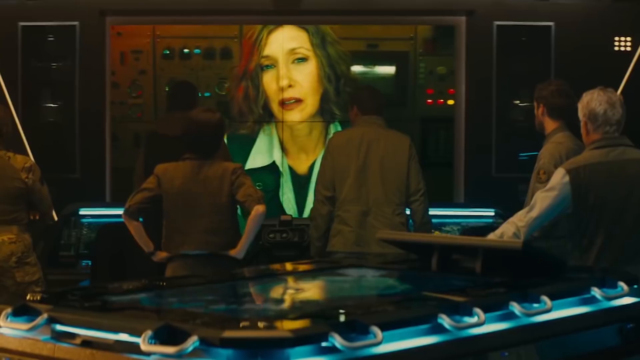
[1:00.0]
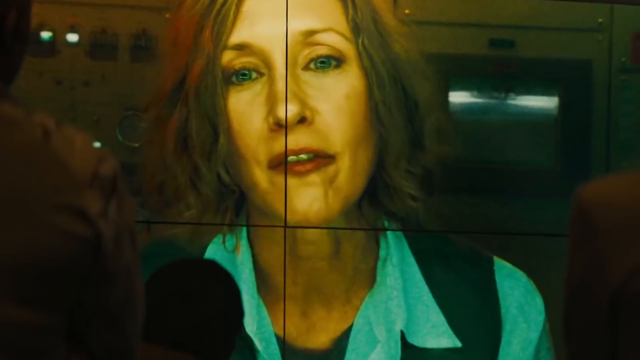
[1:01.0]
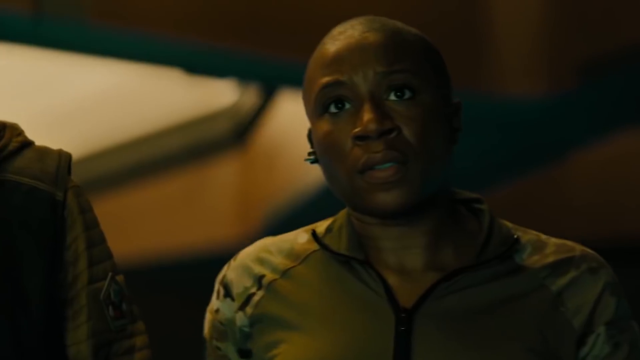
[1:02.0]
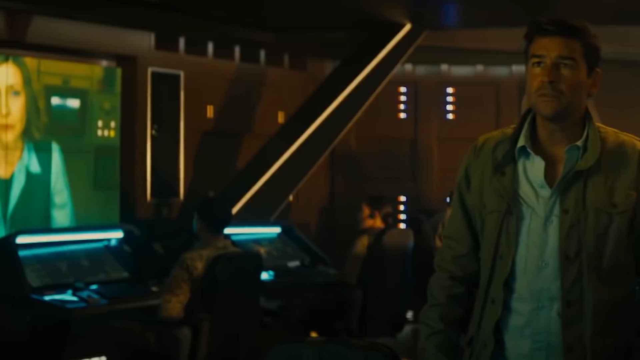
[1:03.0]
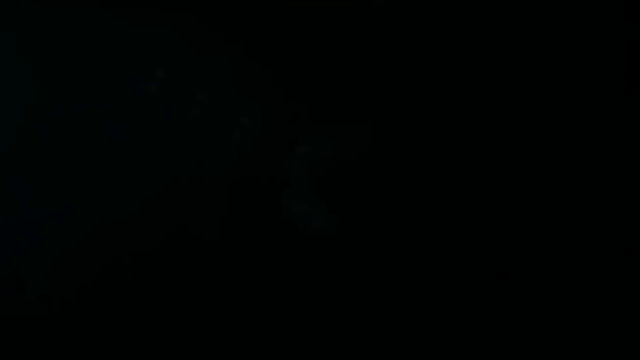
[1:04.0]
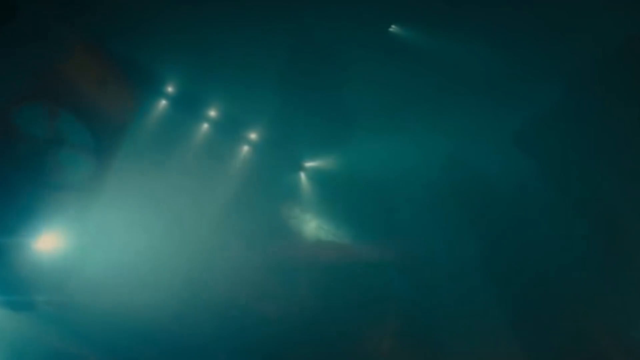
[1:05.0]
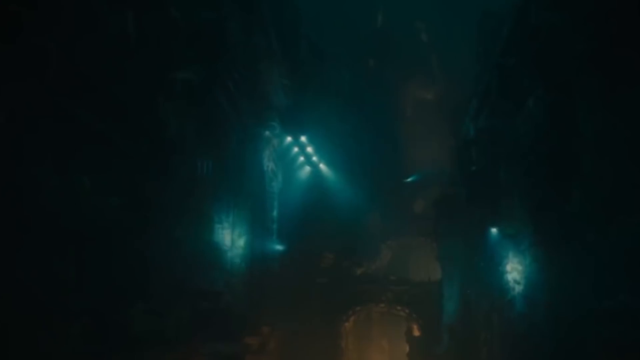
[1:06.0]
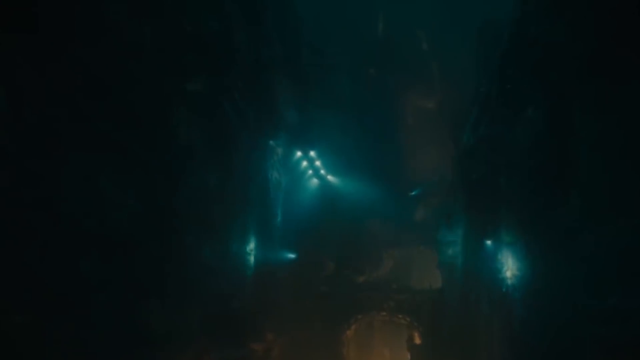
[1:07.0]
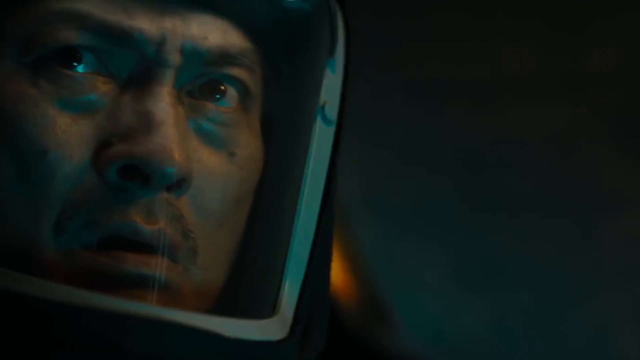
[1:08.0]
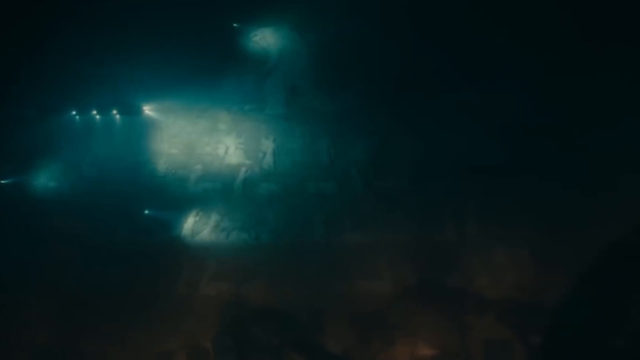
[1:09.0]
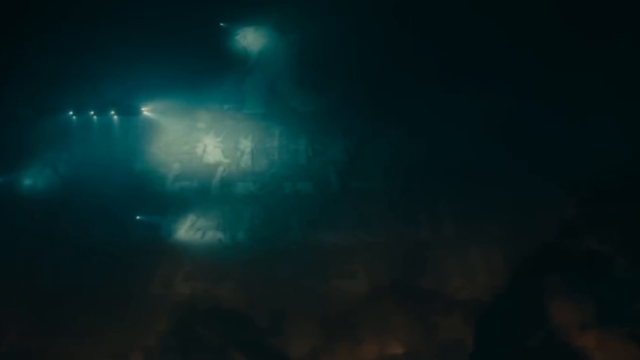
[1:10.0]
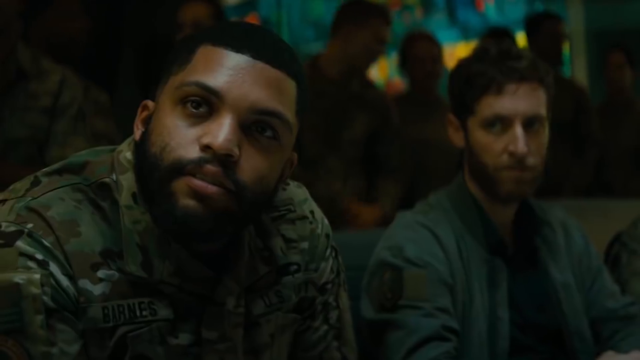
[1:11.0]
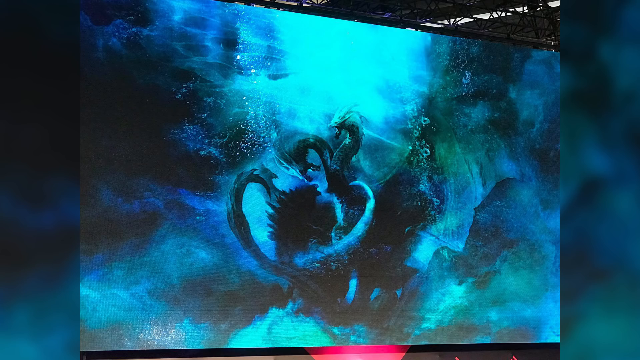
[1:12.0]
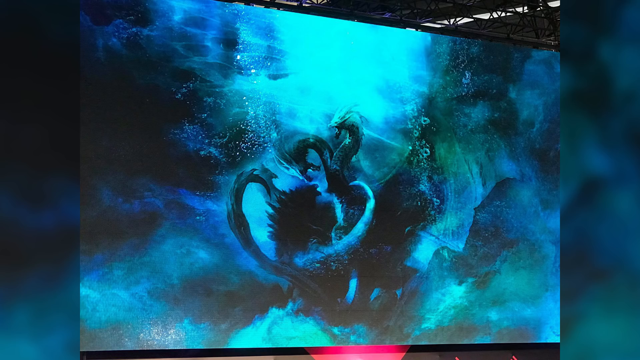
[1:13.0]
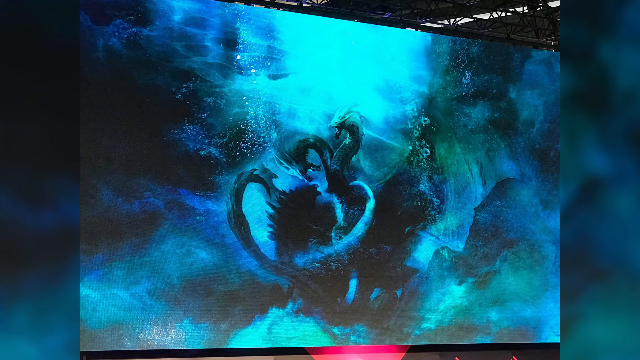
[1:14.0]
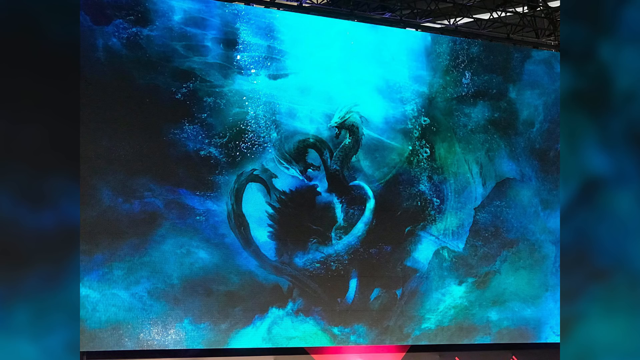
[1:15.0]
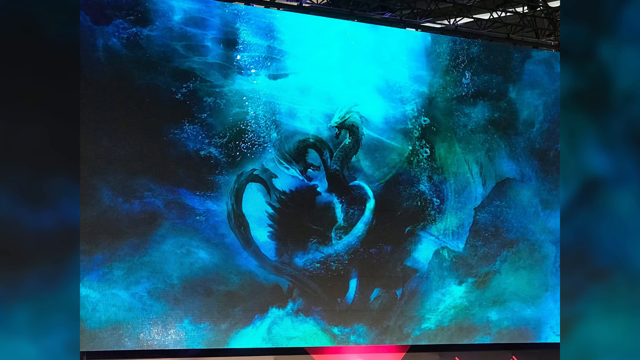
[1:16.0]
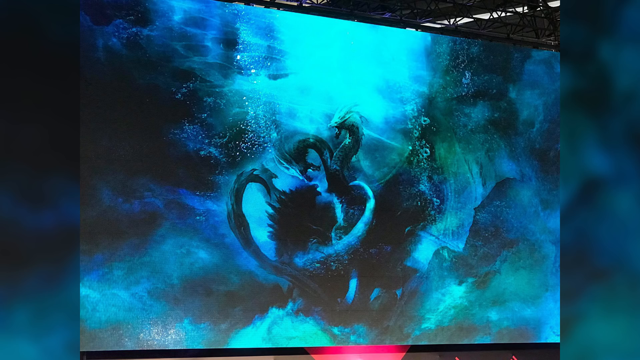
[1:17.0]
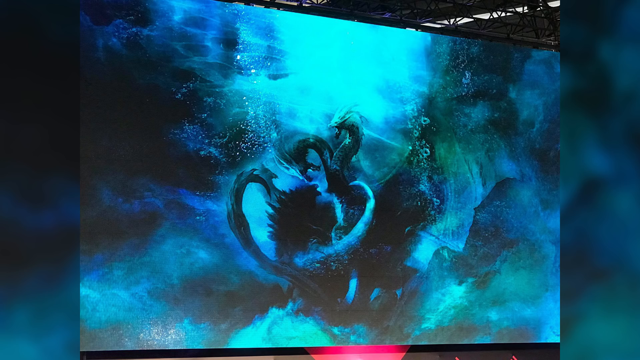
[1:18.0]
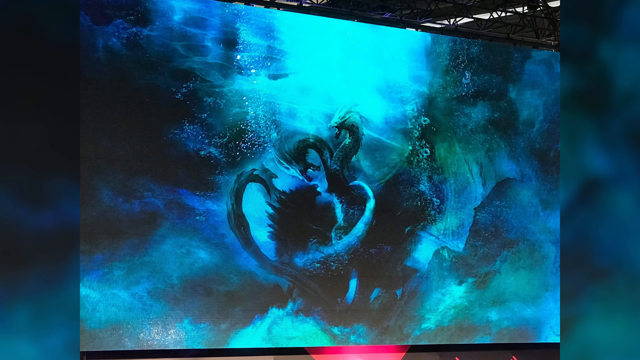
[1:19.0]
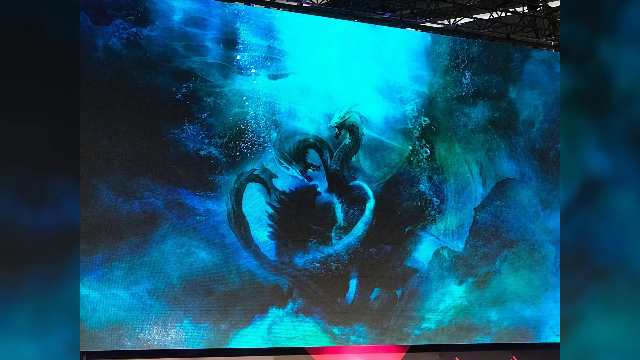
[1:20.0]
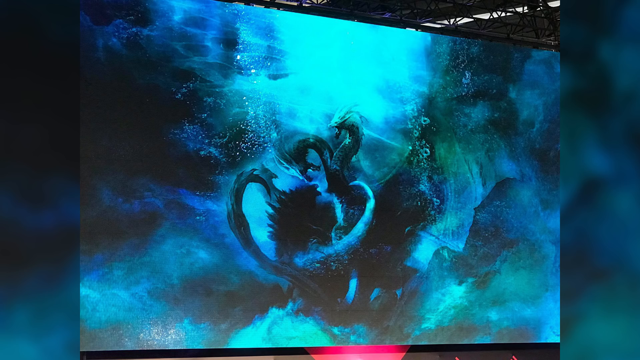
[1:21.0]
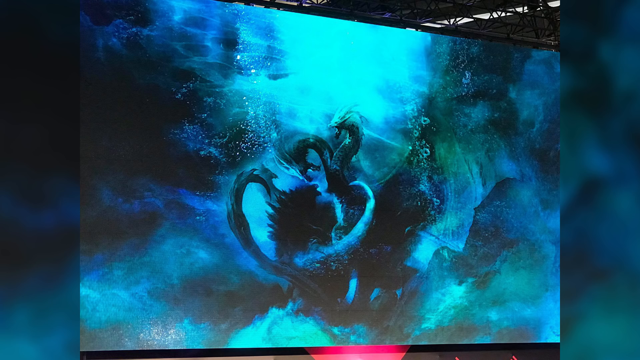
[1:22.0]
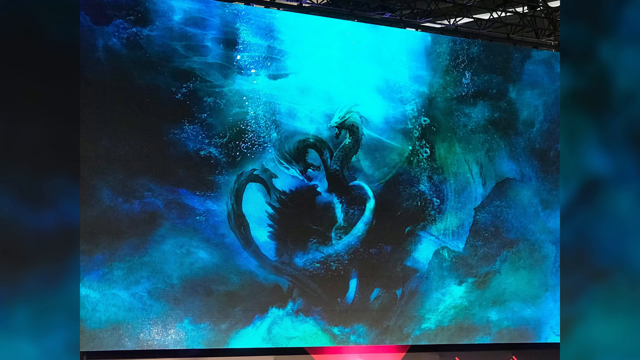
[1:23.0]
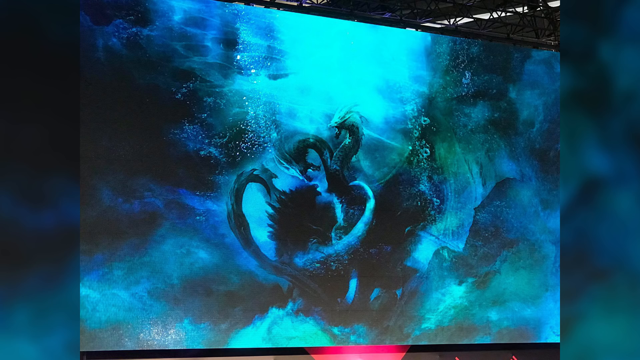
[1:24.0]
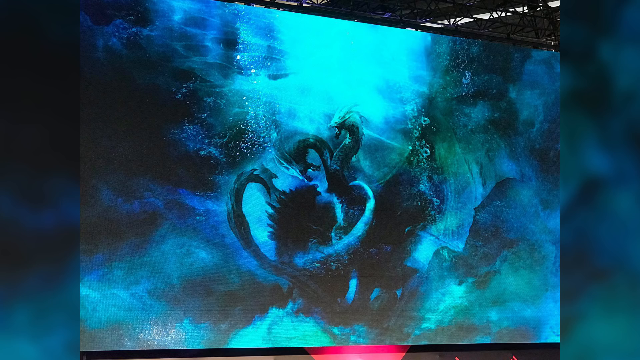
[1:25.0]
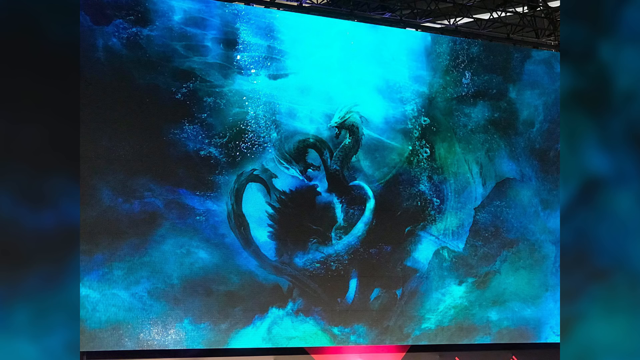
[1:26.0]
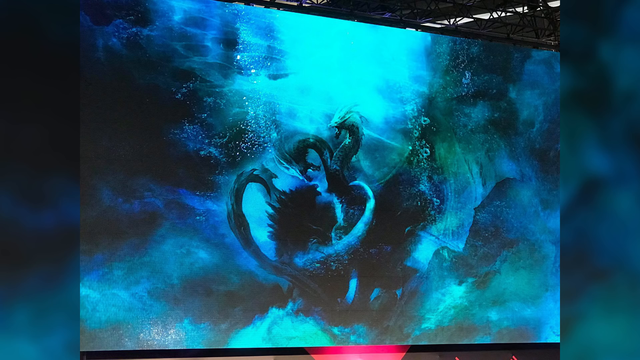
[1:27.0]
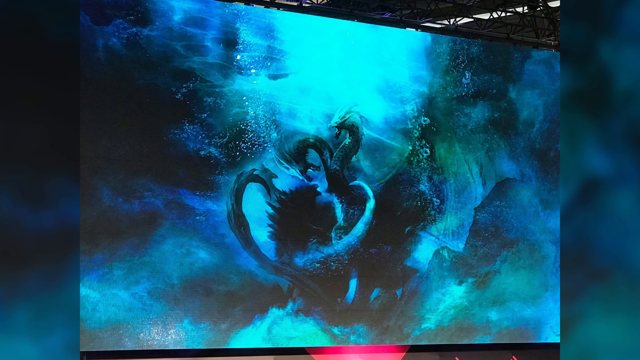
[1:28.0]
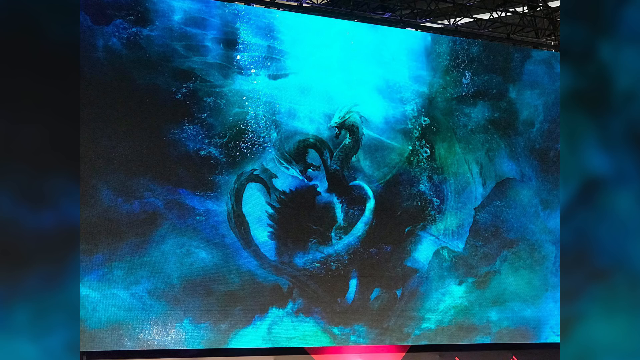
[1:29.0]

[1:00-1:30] Multiple people stand in front of a screen, and on the screen is a white woman with brown hair in a white shirt, talking into a mic. The people watching look surprised; one of them is a Black woman with short hair wearing brown clothes. A submarine with its lights on is submerged in water. A man in a spaceship looks surprised. A dragon with three heads seems to be fighting something against a blue background; the serpent seems to be fighting Godzilla, which has visible things on its back that look like spikes or mountain ranges. The two creatures appear to be fighting inside the water.